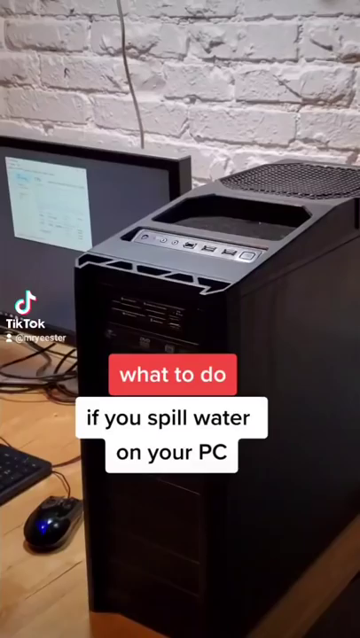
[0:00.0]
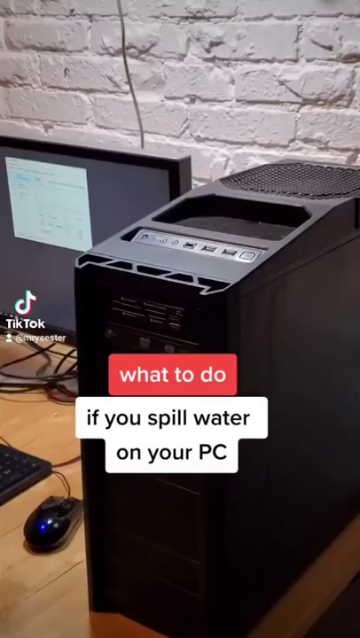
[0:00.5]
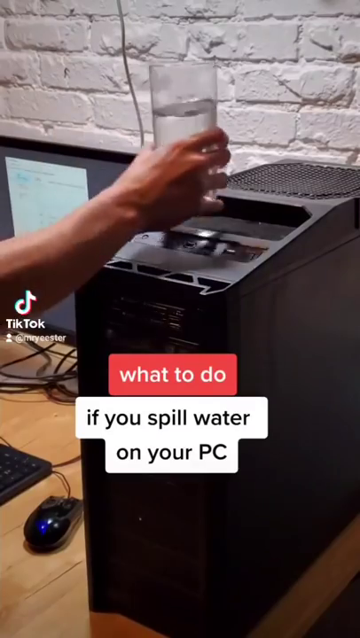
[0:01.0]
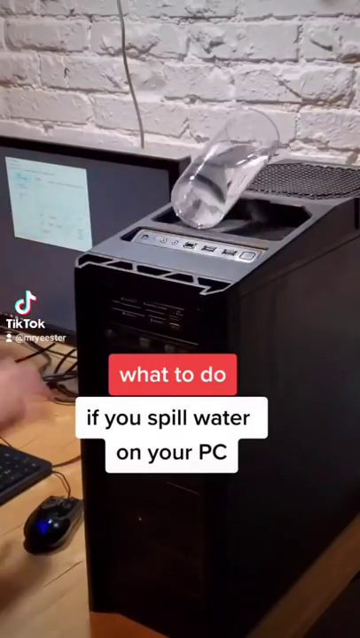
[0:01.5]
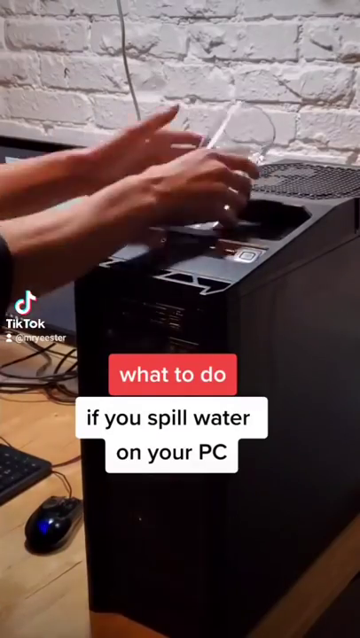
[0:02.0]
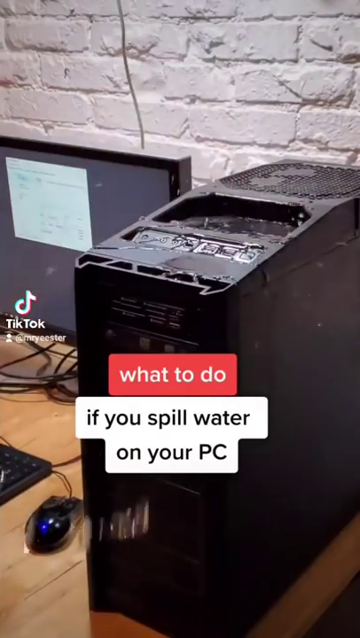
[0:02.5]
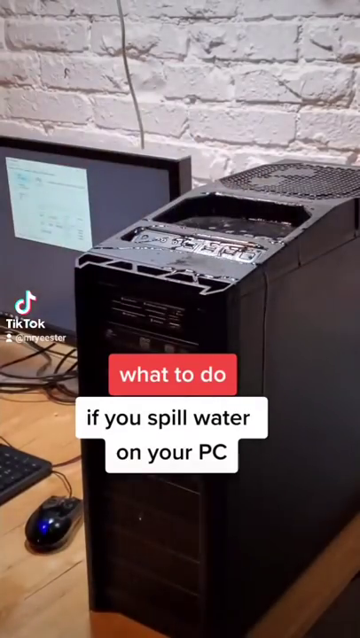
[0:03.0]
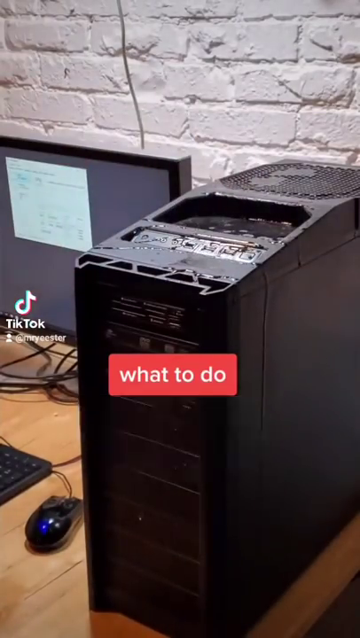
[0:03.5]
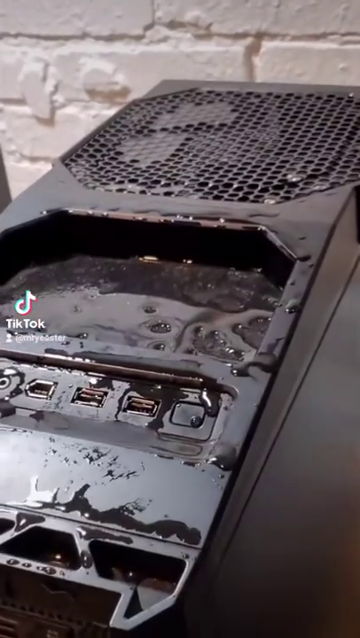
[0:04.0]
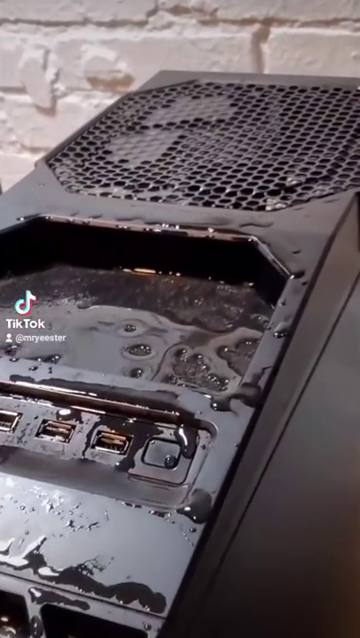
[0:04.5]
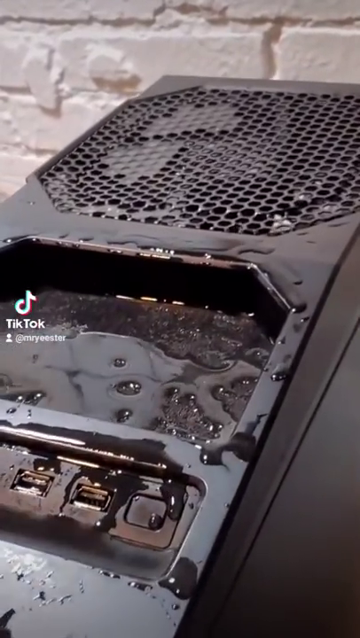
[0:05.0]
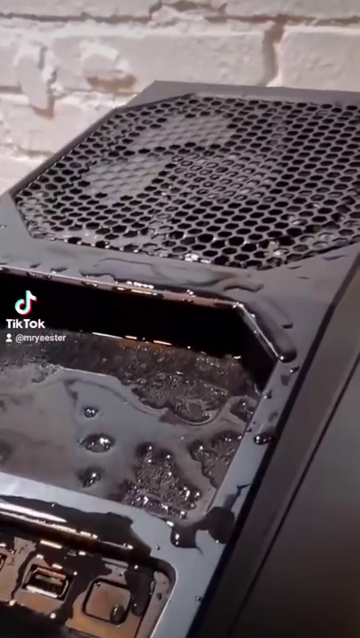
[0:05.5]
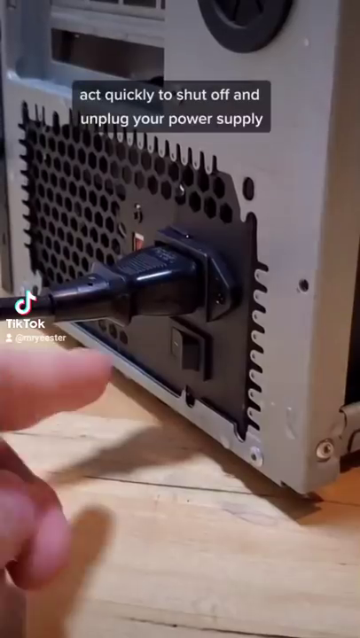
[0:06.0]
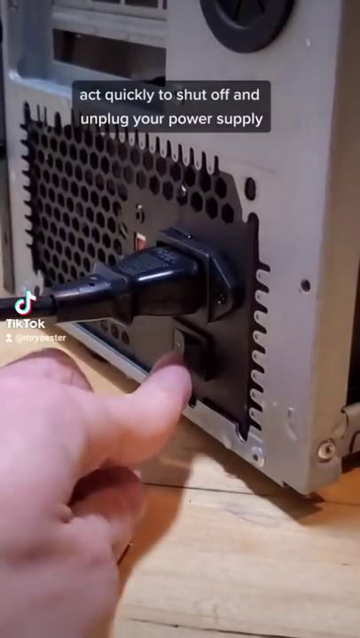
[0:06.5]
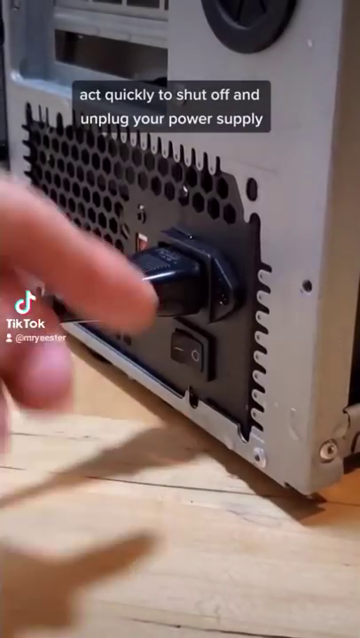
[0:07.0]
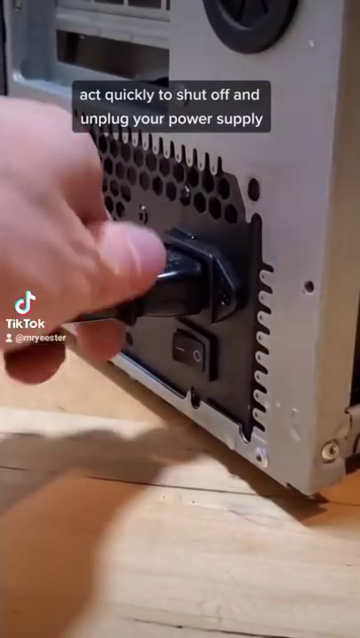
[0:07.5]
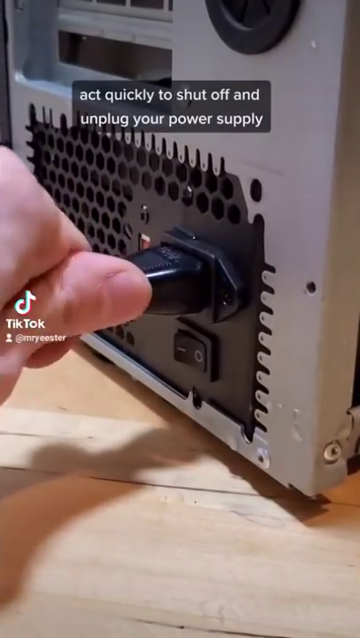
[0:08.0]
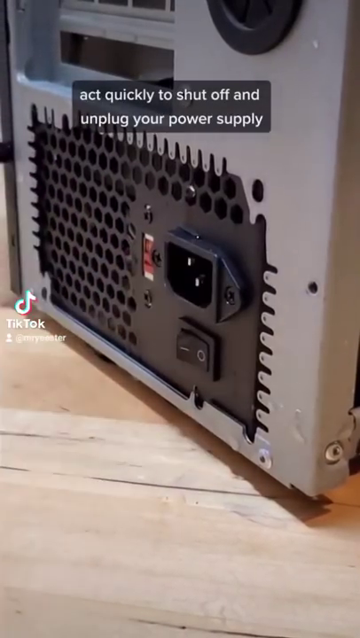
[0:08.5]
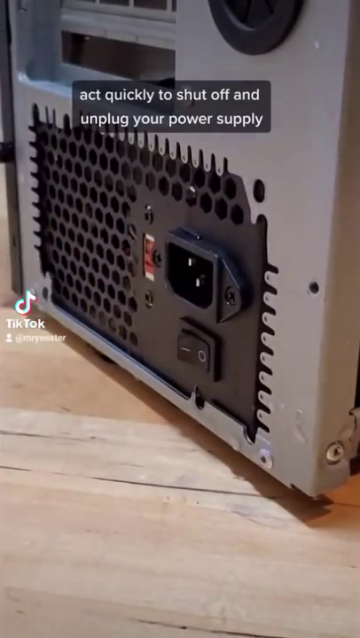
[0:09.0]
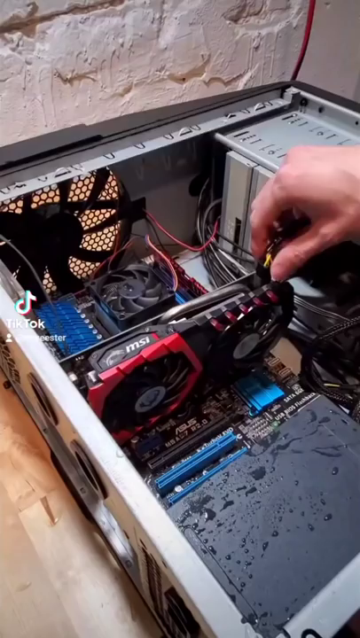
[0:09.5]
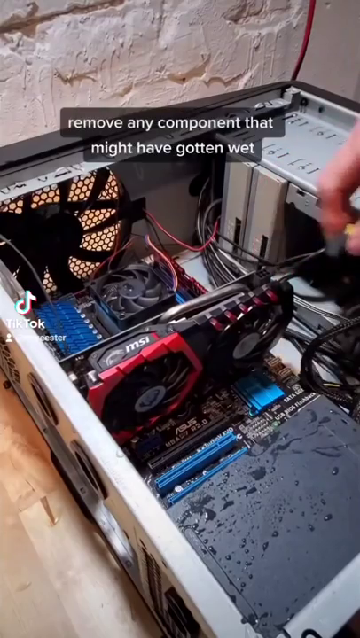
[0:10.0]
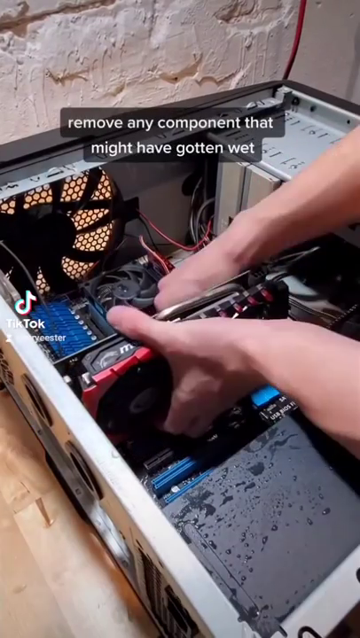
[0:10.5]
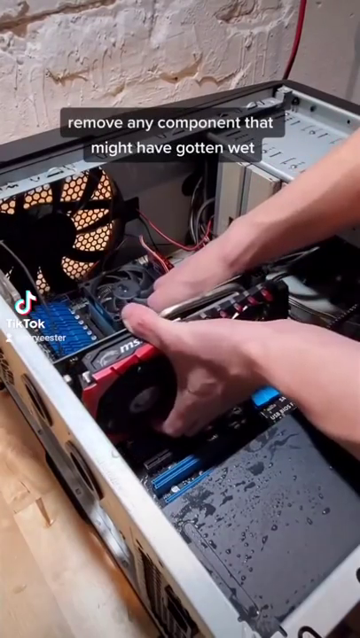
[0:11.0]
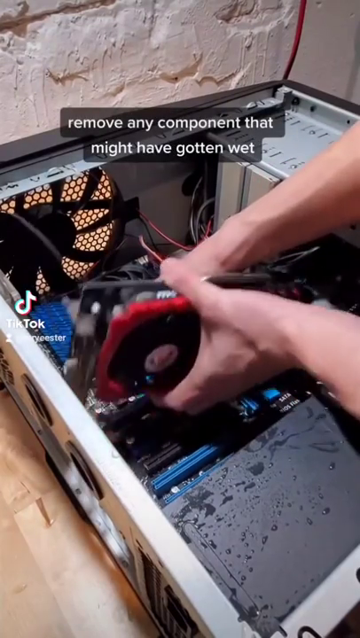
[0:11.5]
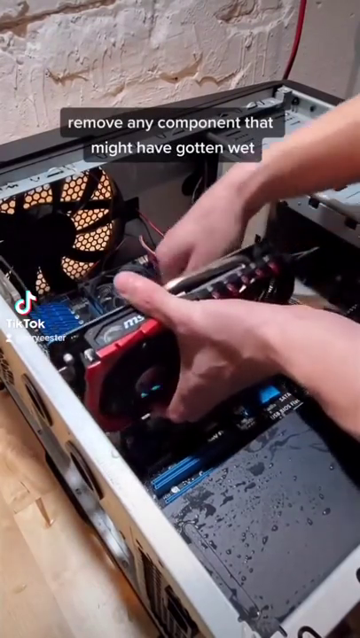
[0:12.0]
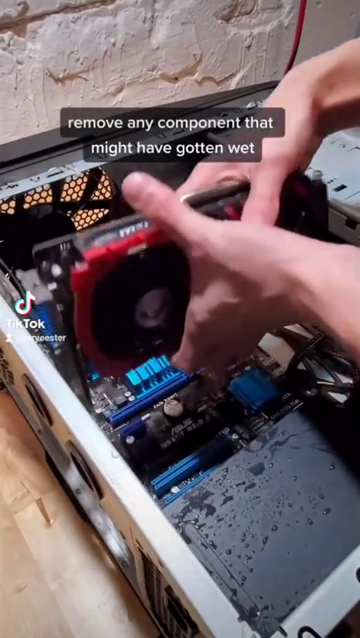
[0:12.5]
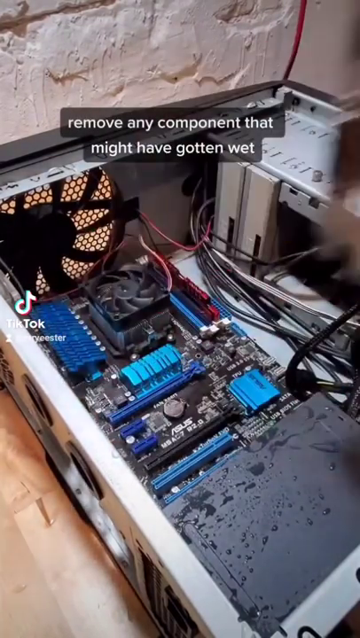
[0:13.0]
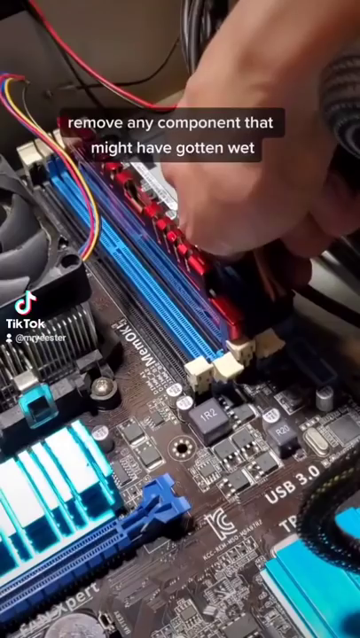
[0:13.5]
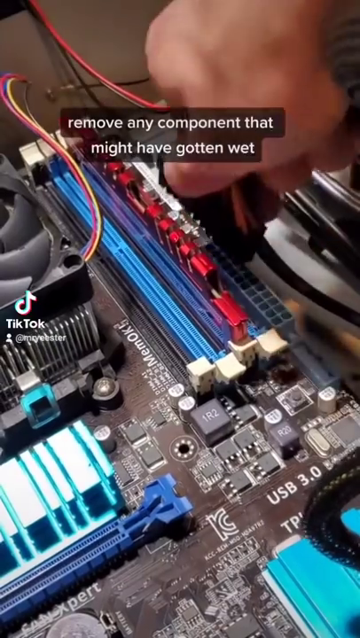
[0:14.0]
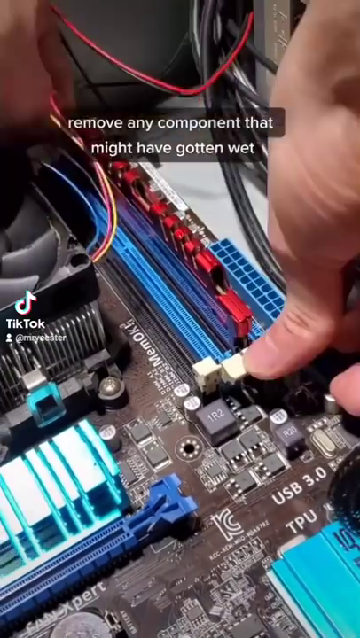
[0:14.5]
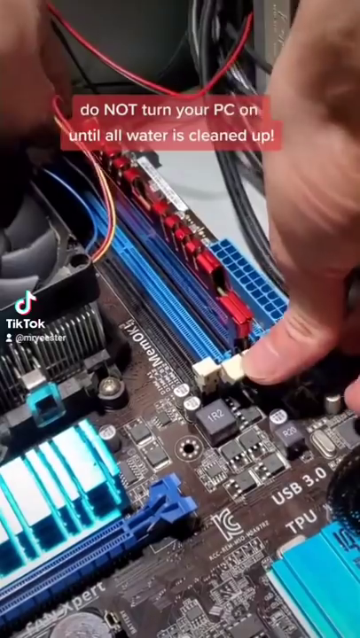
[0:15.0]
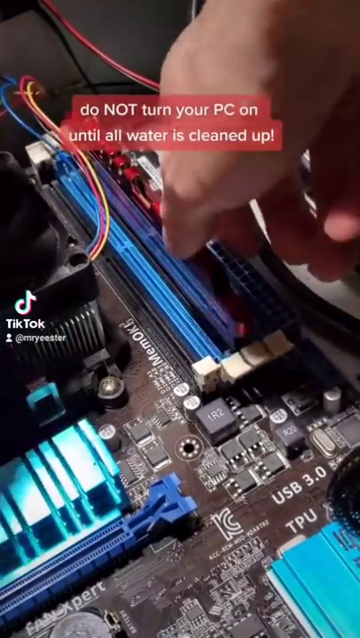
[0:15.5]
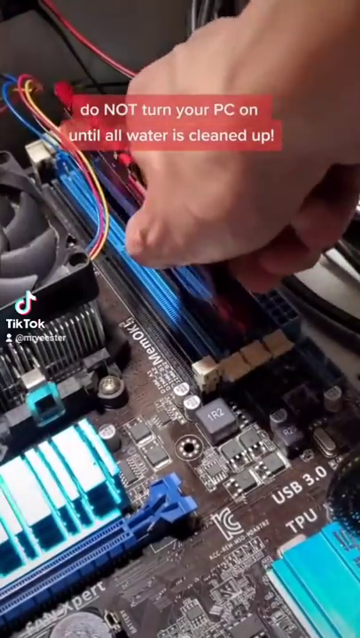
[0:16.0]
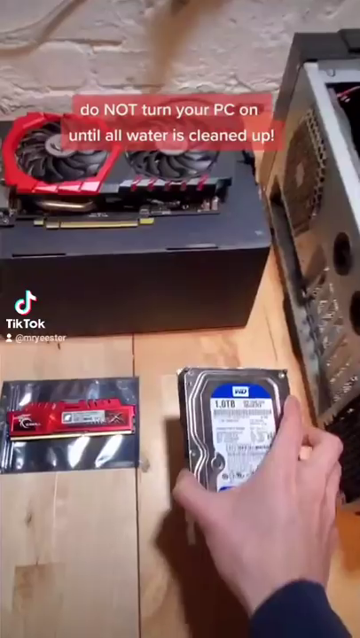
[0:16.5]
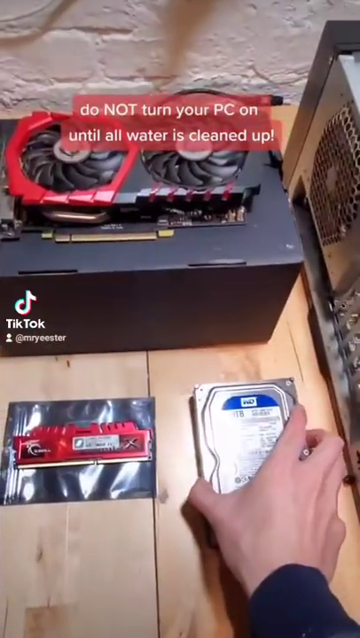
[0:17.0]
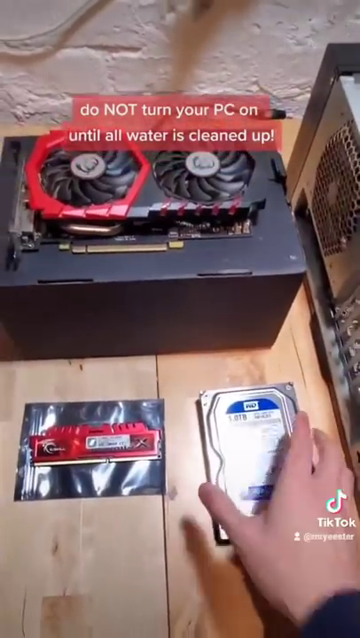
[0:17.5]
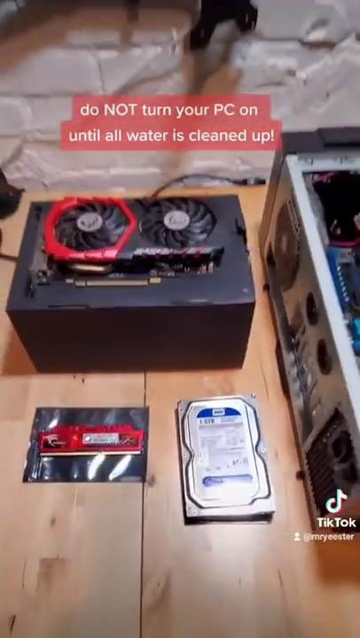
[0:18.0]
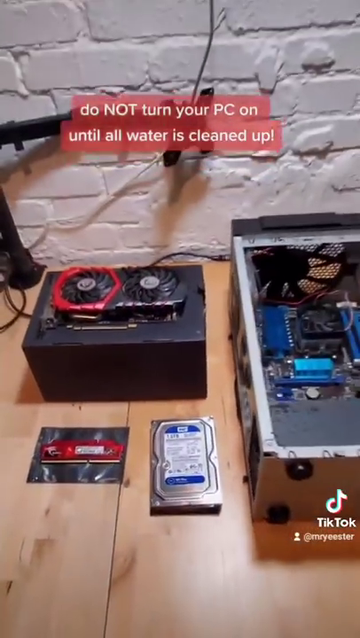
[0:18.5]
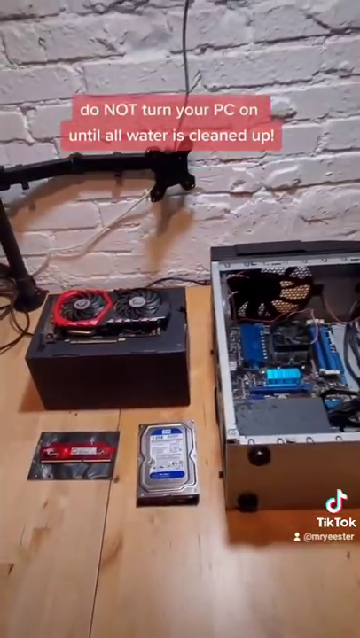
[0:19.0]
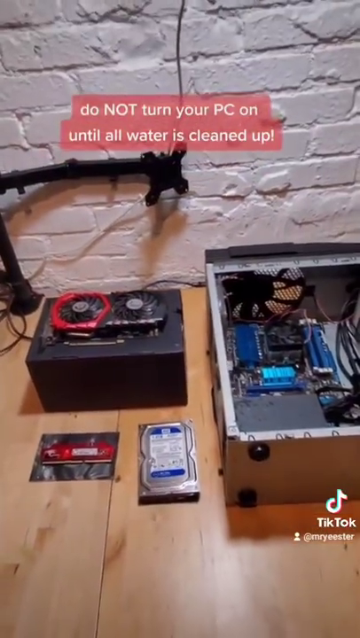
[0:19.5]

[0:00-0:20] A short-form video shows an accidental water spill onto a computer and how to handle it. A tower-style PC is up on a desk with a white brick wall behind it. A person goes to set a water glass on top of the PC, and it falls over and spills, dumping water onto the top and in through the fan grating at the top. The person removes the power cord and shuts off the PC, with instructions to start there and then remove any components inside that may have gotten wet. During that process, the person removes a video card, some RAM and various power cables and other parts, setting everything off to the side of the PC while the computer dries.